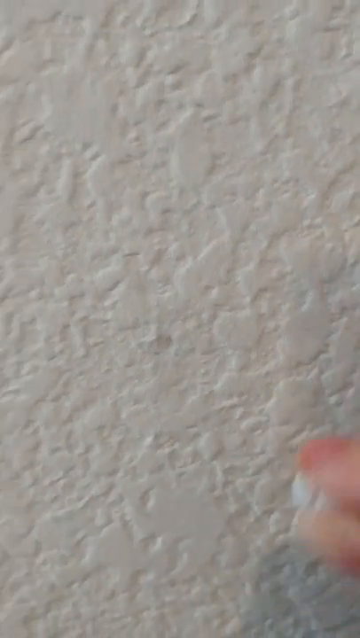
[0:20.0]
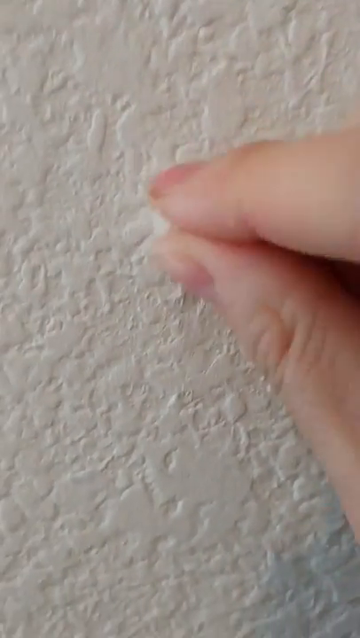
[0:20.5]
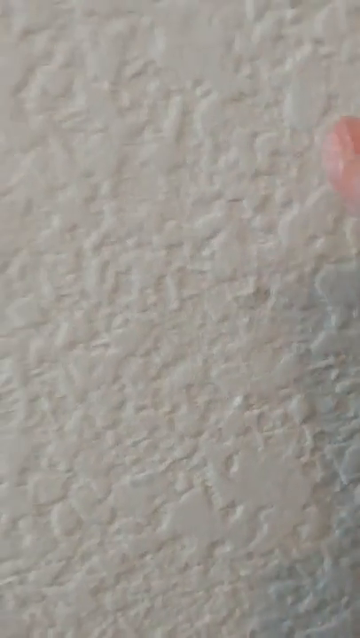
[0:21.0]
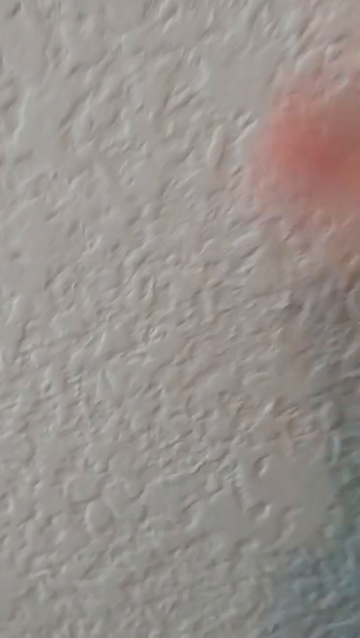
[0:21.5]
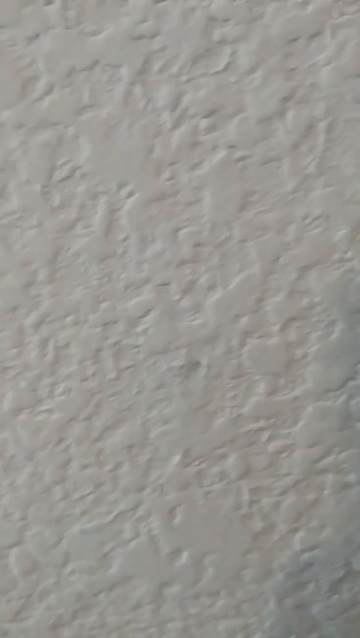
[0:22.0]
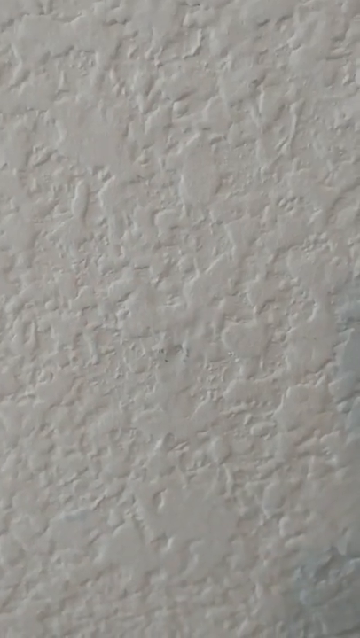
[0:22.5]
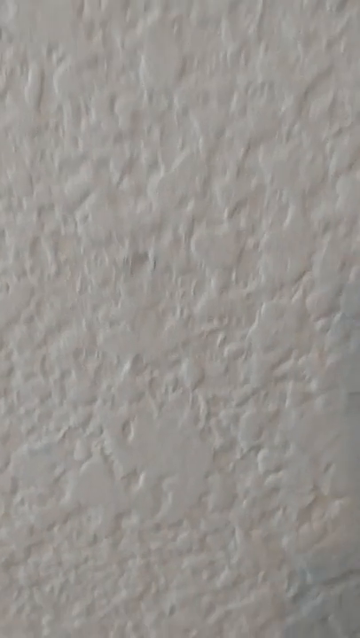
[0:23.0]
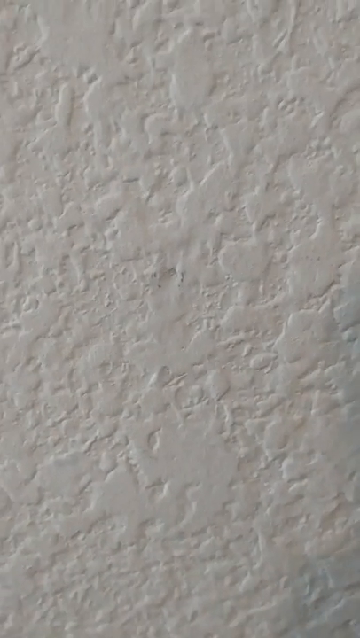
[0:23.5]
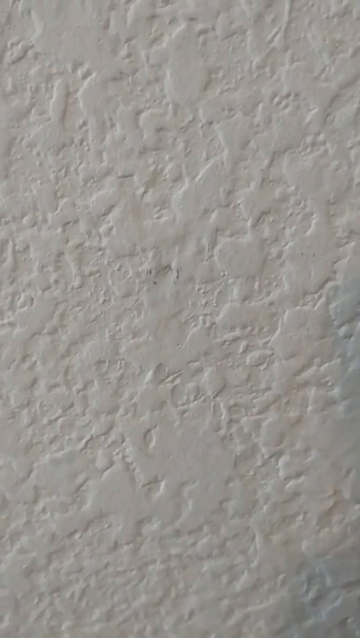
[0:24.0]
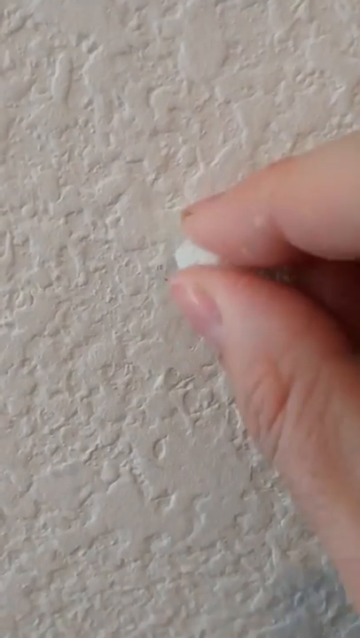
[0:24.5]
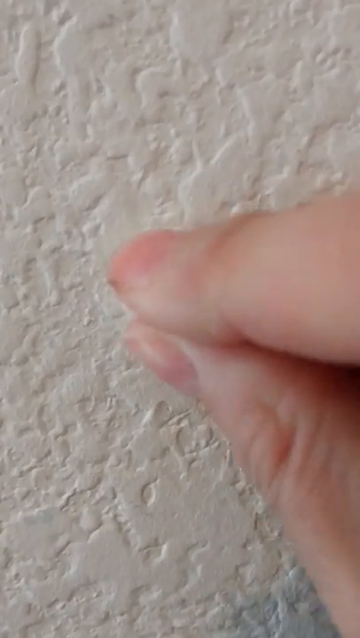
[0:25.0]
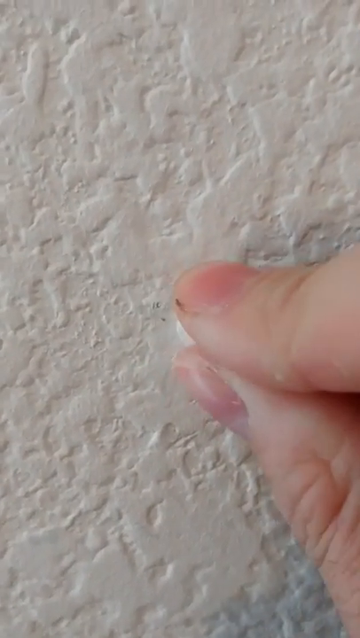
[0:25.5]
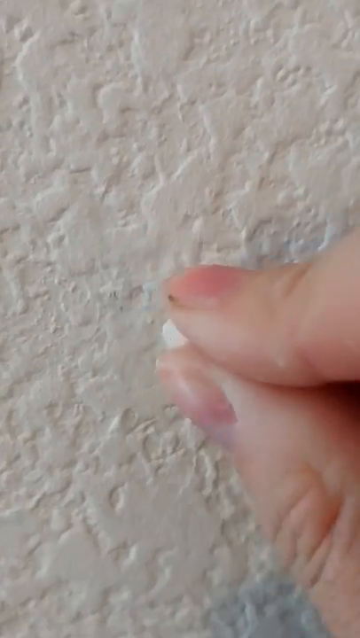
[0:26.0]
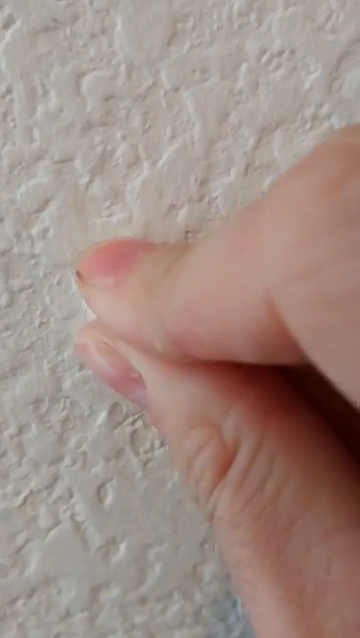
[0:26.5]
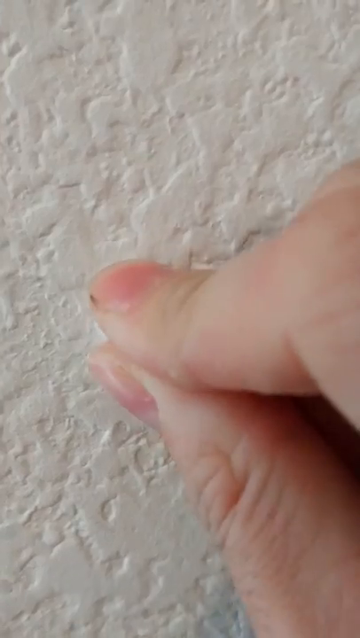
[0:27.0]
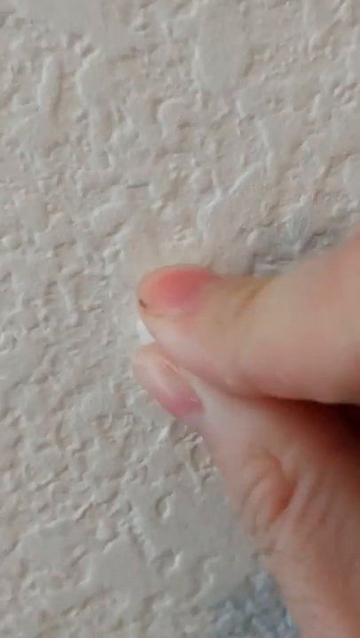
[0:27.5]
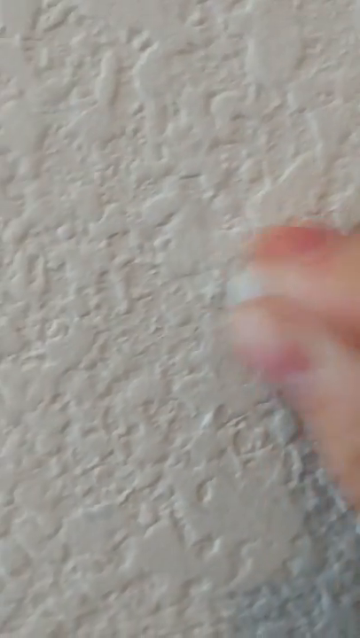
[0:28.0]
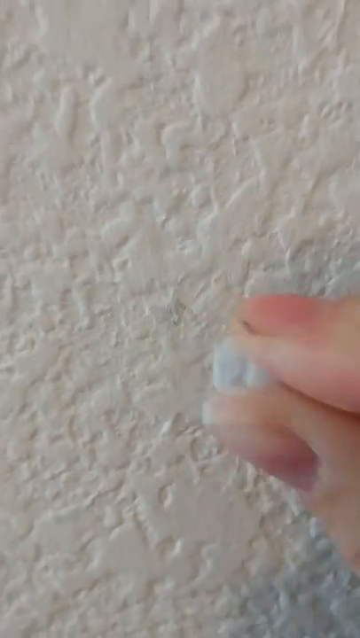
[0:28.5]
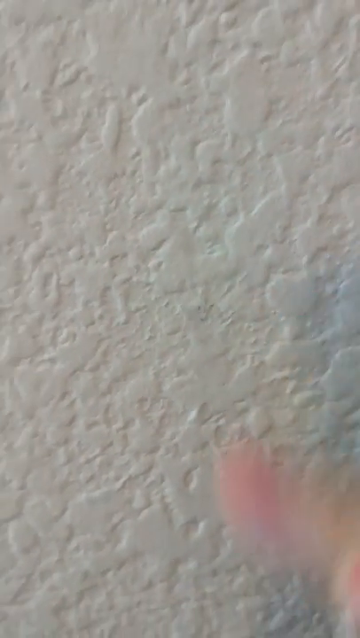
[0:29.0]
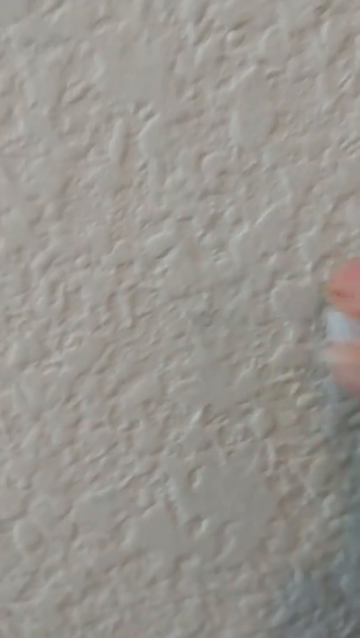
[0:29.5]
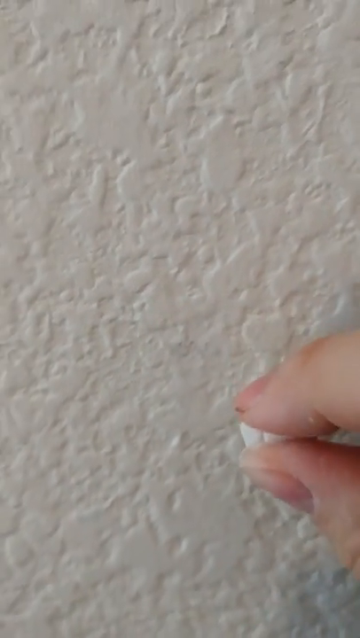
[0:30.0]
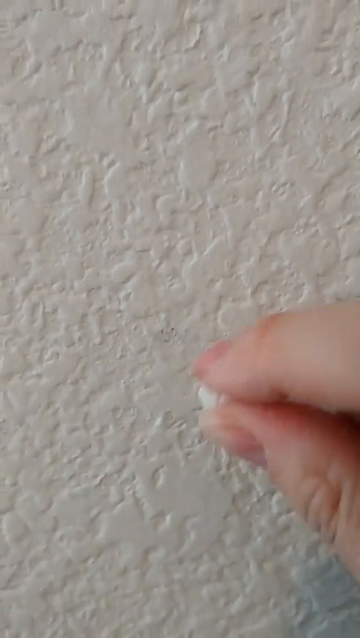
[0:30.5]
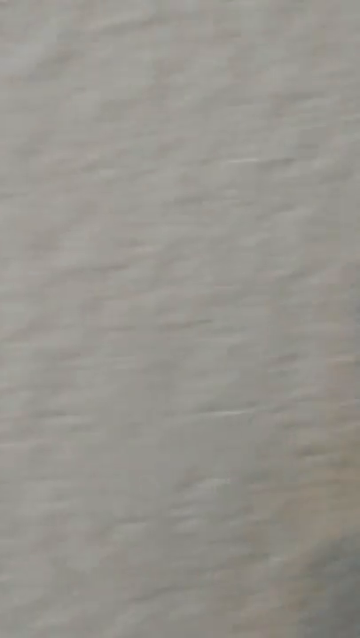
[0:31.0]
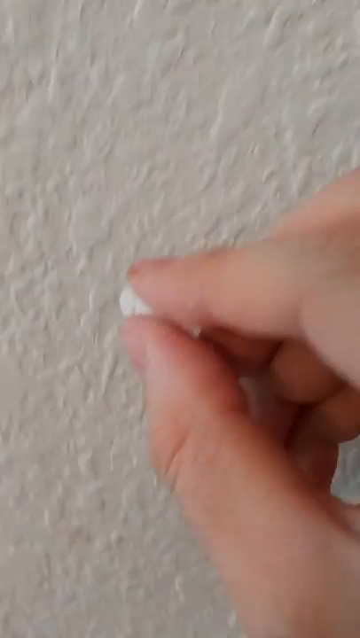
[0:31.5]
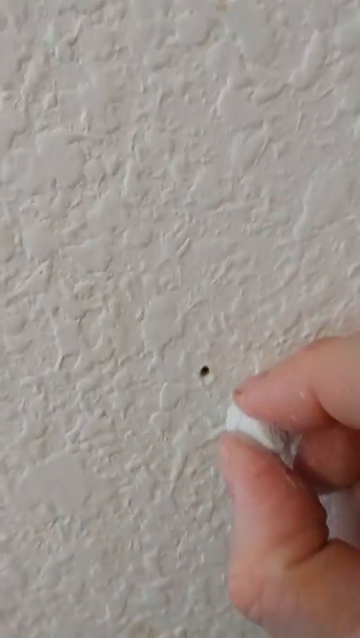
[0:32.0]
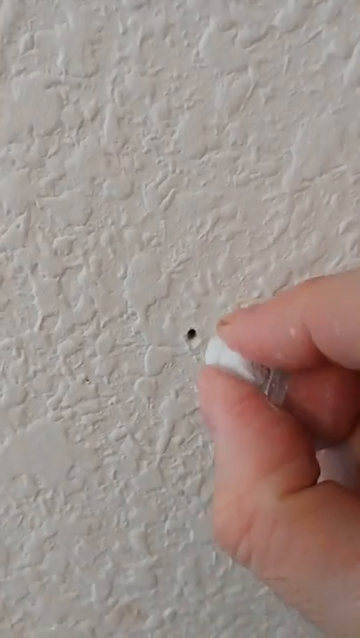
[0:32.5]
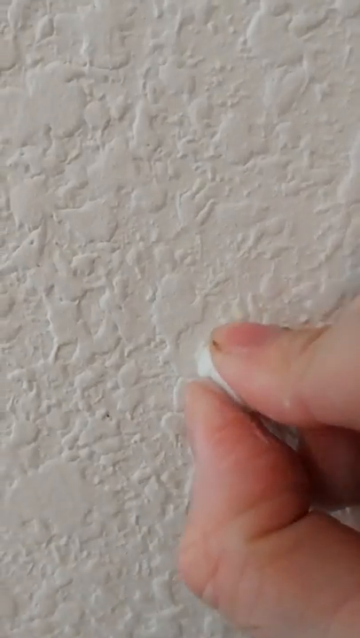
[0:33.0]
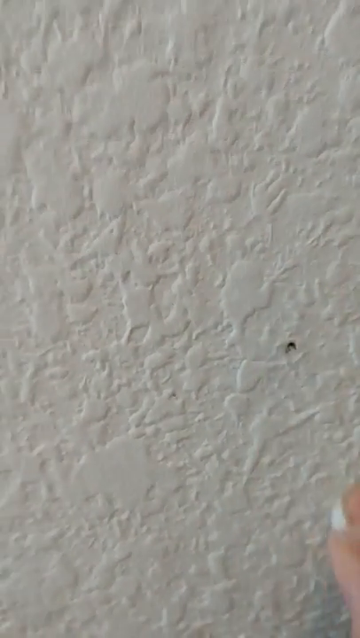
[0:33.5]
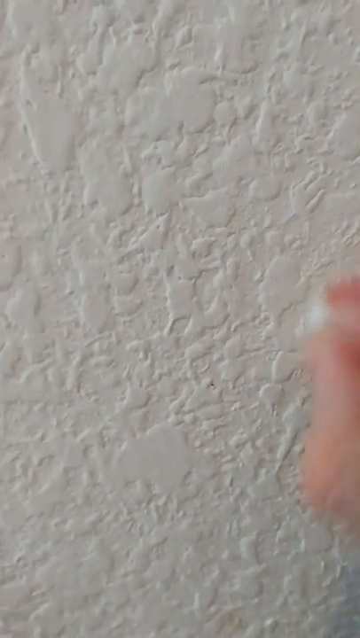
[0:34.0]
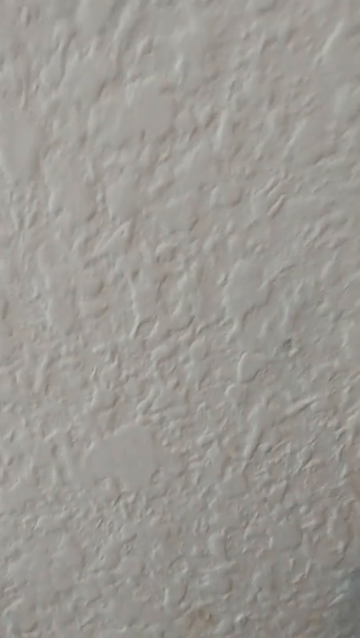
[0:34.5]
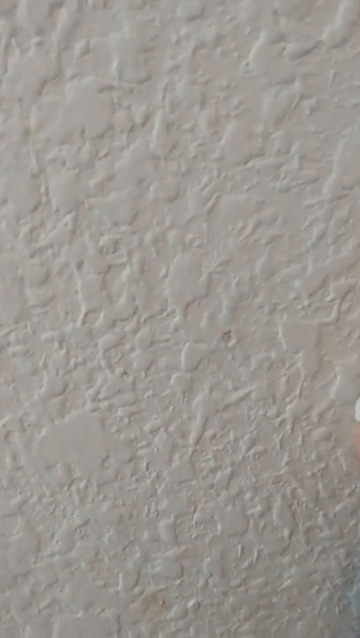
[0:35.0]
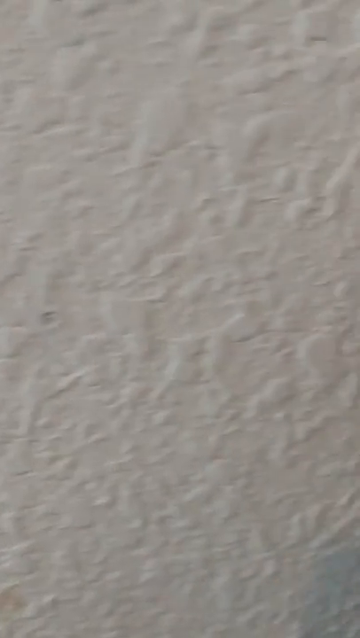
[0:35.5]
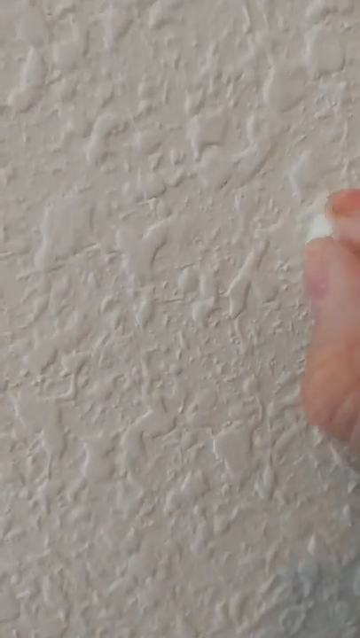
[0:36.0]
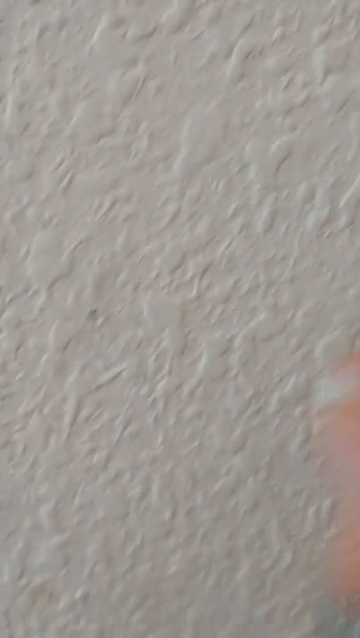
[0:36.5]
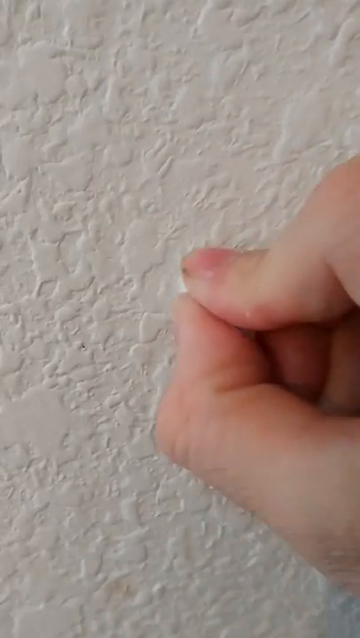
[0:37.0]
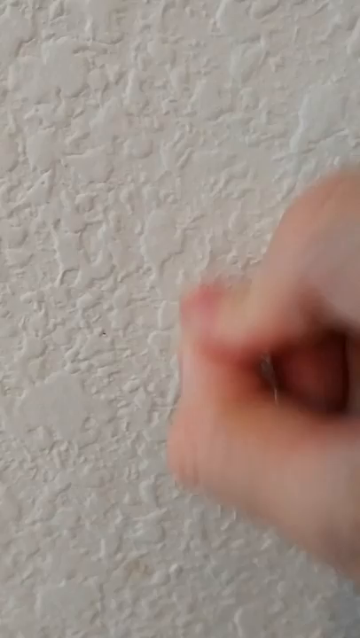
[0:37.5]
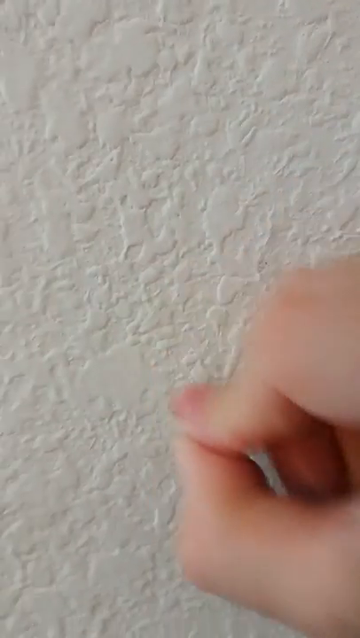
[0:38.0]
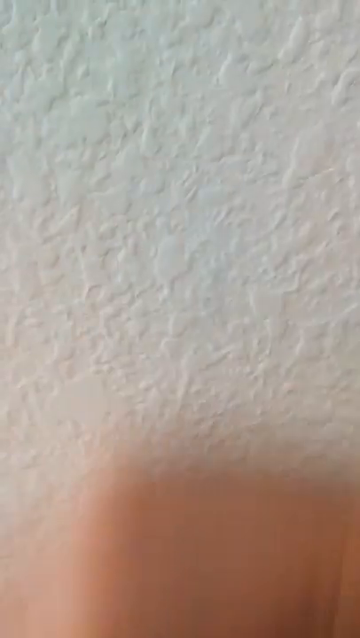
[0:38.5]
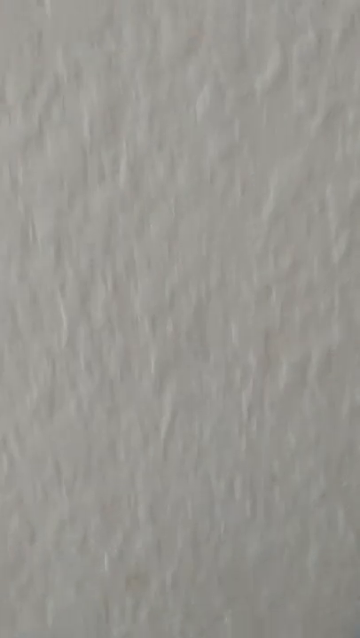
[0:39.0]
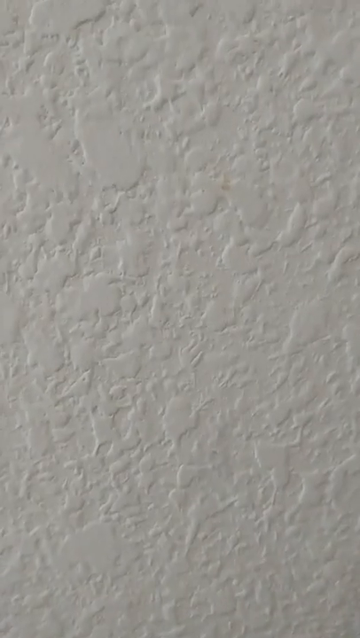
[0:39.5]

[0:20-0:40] The person's fingers are visible at the side, holding a piece of chalk. There is a little scrub mark in the center of the wall, but the holes are pretty much gone and can no longer be seen against the wall's existing rough texture. The person wipes off a little, and anywhere there is a dimple or something that looks a little off, they rub some more chalk over it. The scene switches to another hole, where they do the same thing: rubbing chalk into it, covering it up, and smoothing it off so it looks like the rest of the wall.